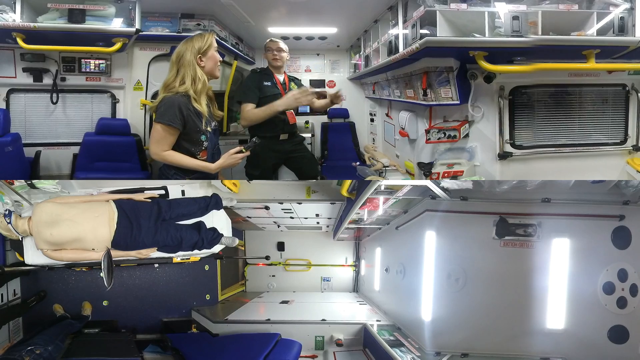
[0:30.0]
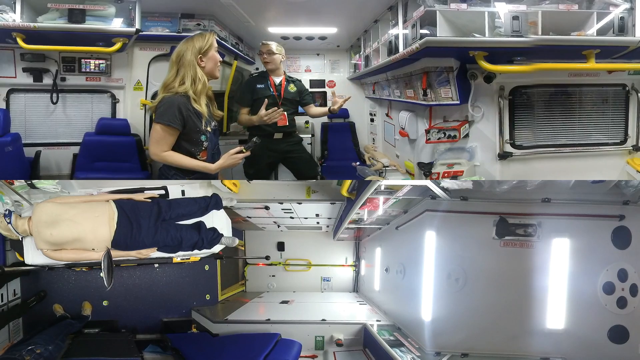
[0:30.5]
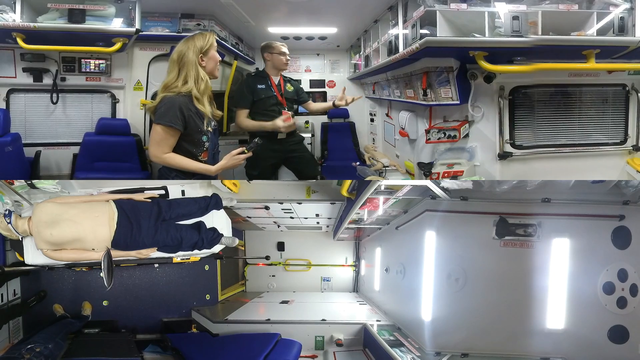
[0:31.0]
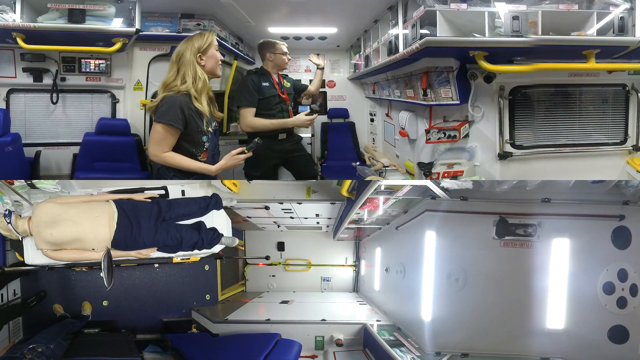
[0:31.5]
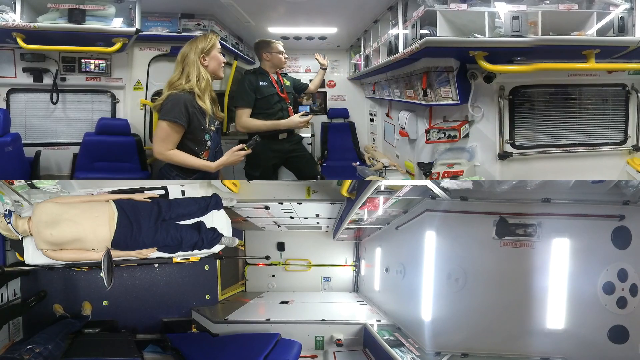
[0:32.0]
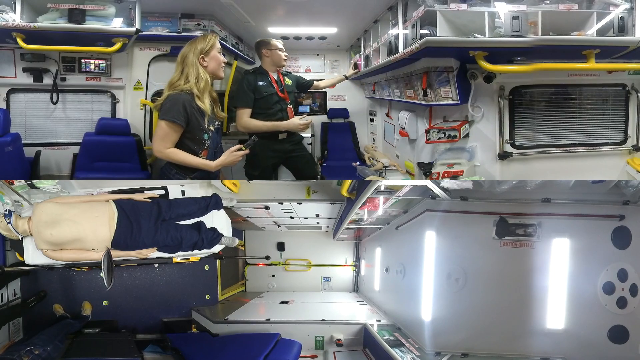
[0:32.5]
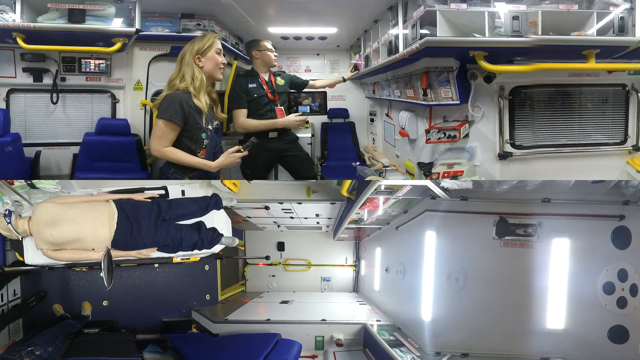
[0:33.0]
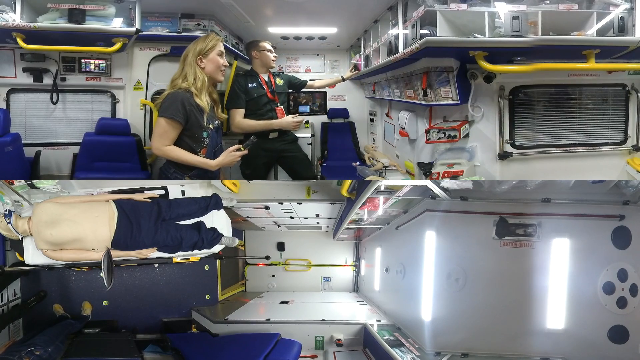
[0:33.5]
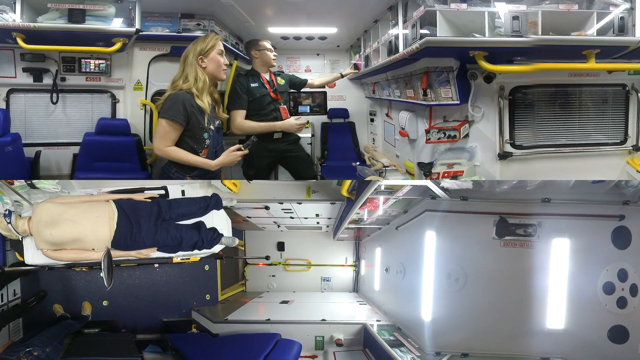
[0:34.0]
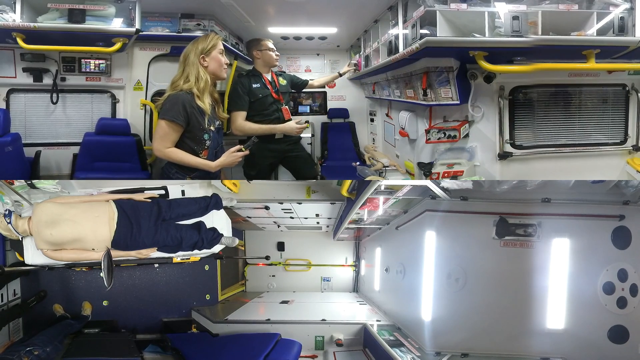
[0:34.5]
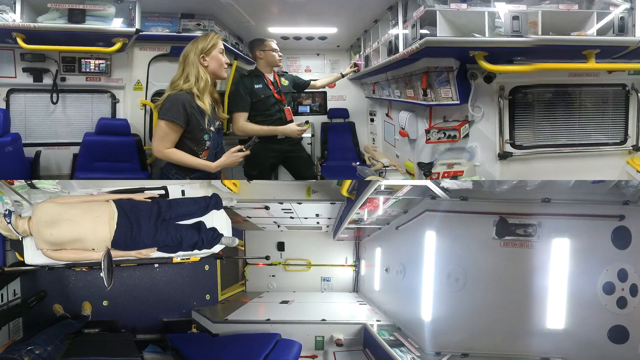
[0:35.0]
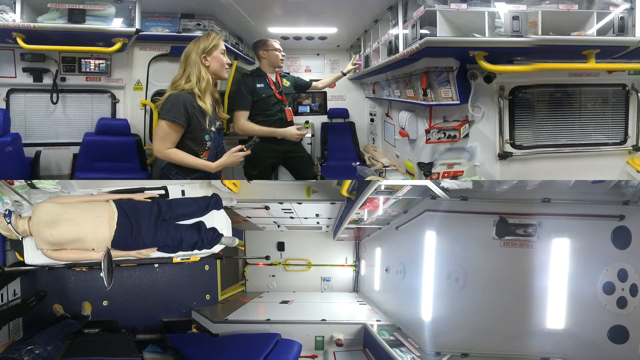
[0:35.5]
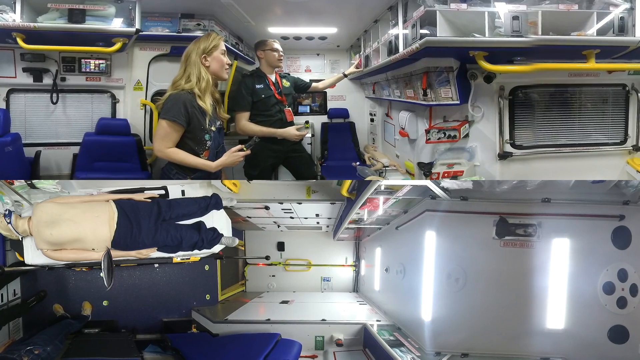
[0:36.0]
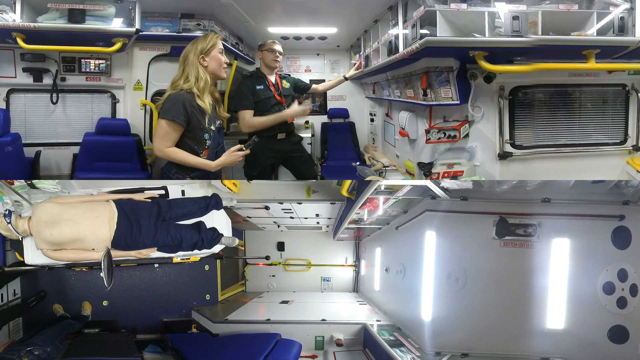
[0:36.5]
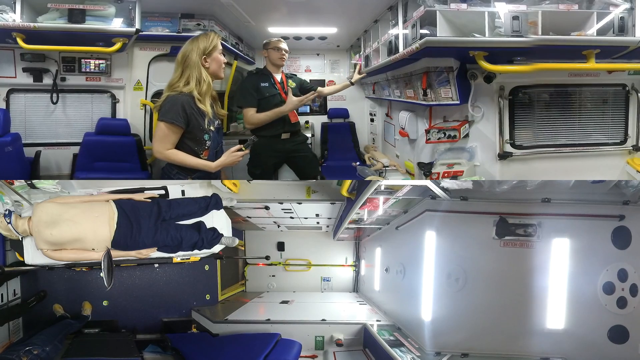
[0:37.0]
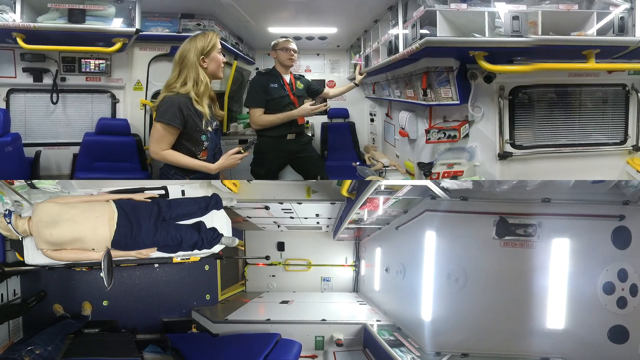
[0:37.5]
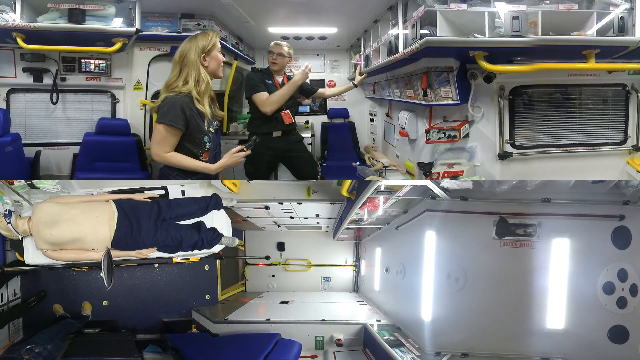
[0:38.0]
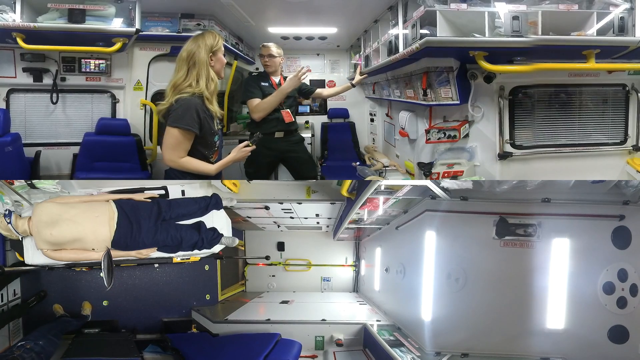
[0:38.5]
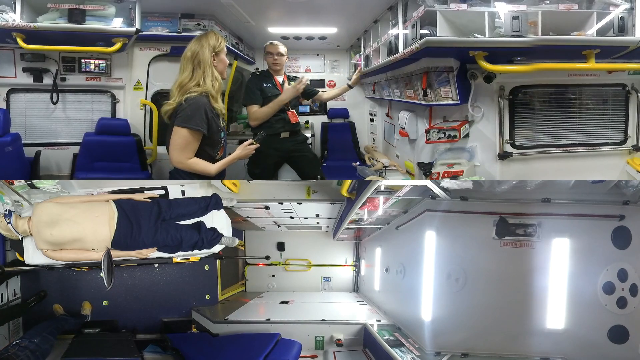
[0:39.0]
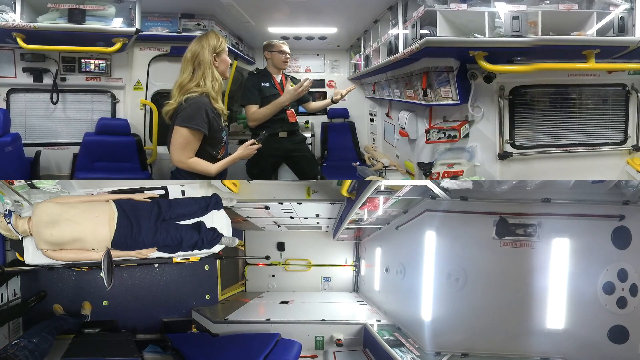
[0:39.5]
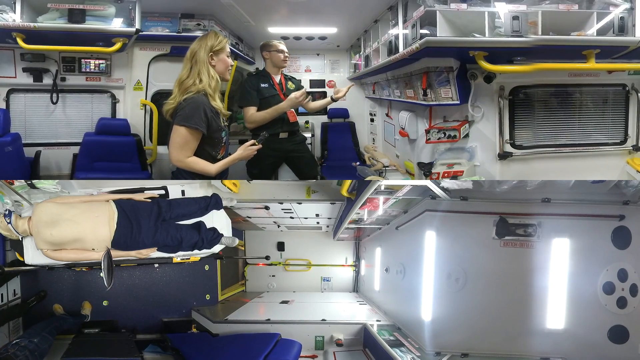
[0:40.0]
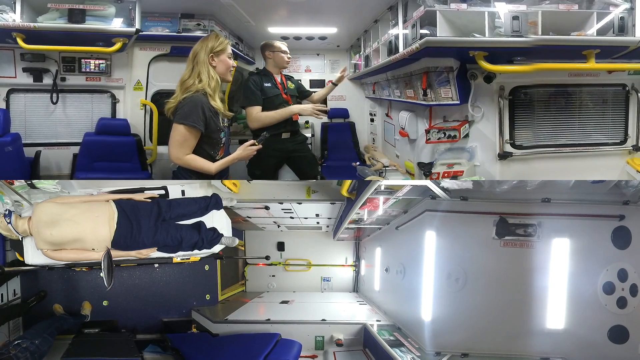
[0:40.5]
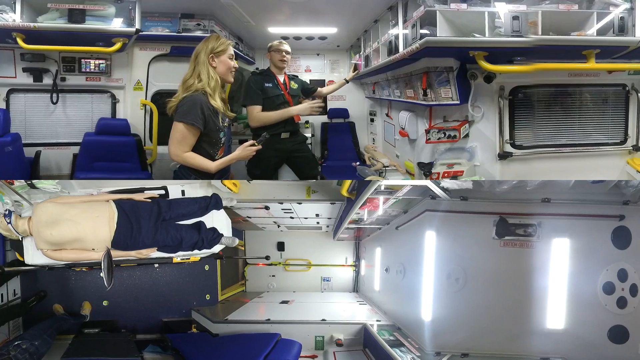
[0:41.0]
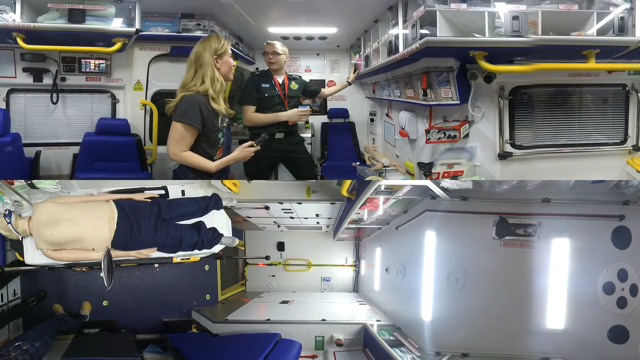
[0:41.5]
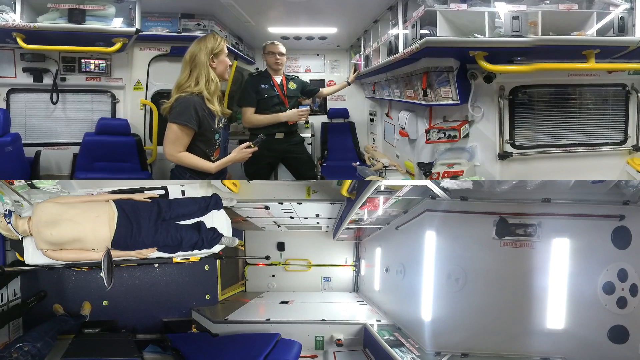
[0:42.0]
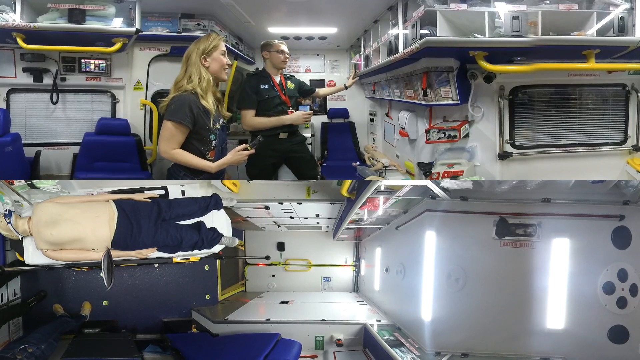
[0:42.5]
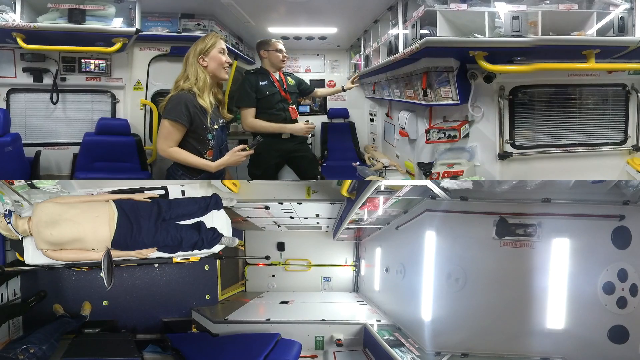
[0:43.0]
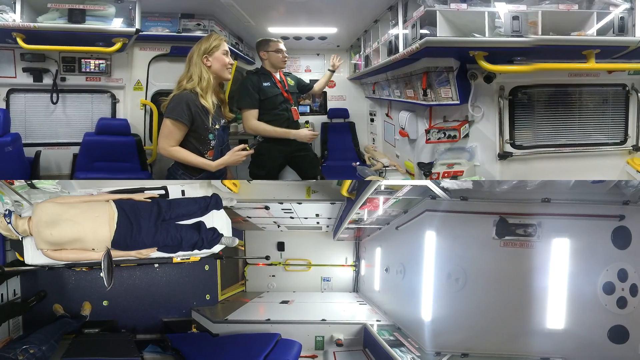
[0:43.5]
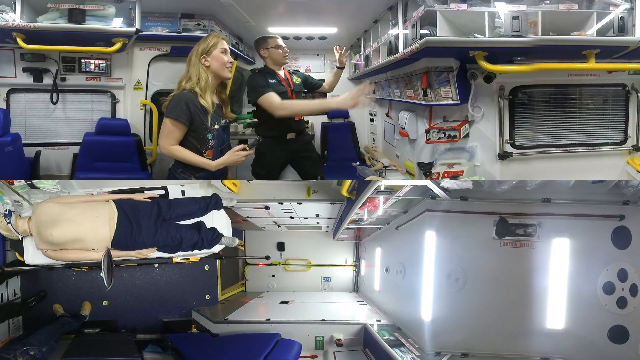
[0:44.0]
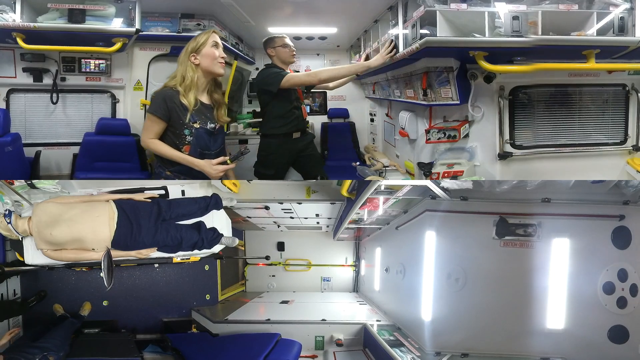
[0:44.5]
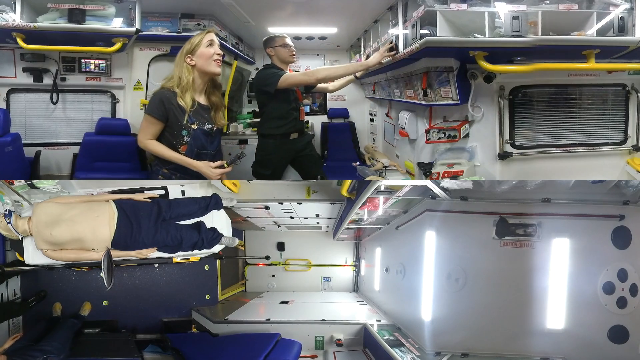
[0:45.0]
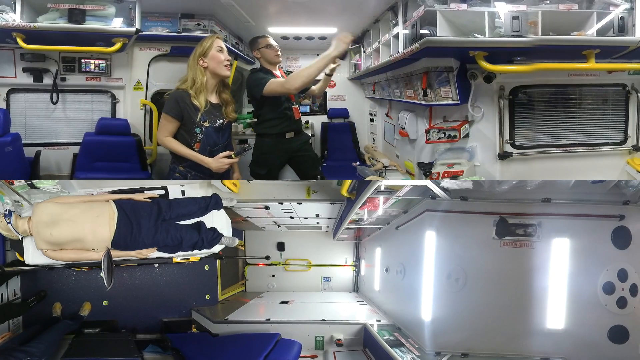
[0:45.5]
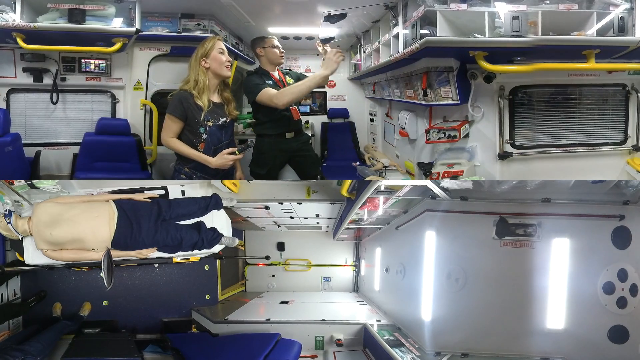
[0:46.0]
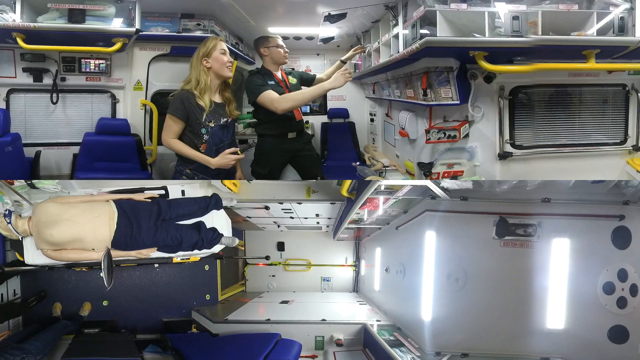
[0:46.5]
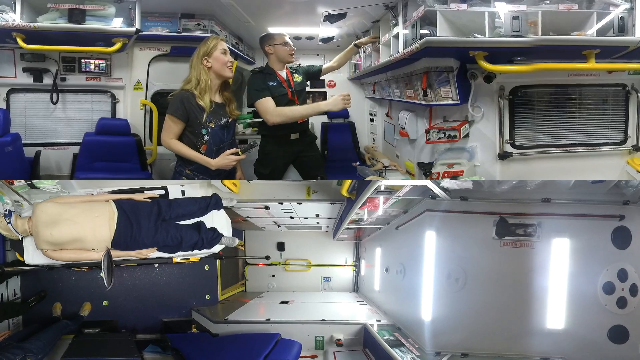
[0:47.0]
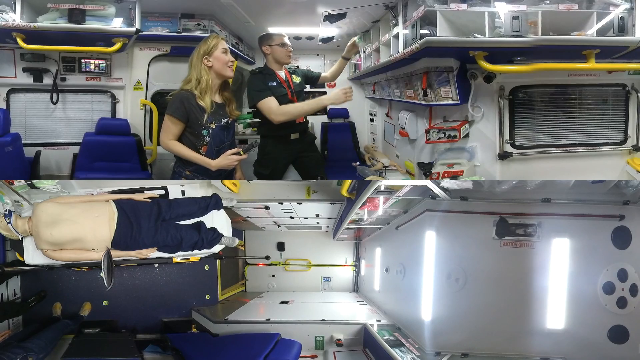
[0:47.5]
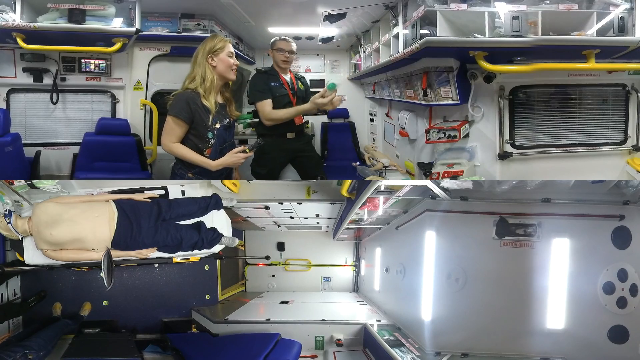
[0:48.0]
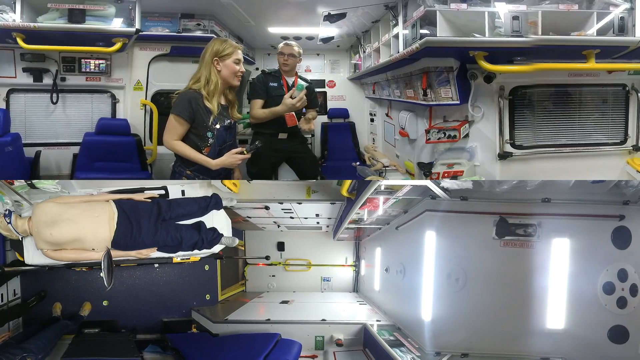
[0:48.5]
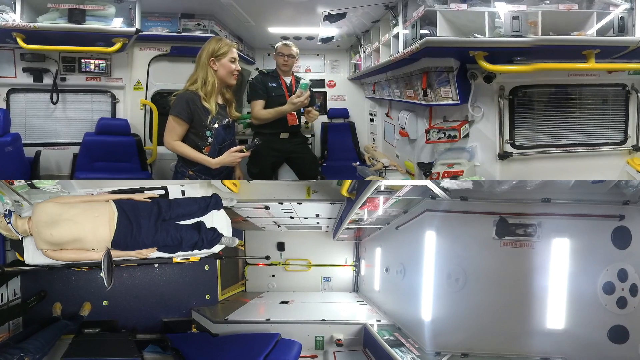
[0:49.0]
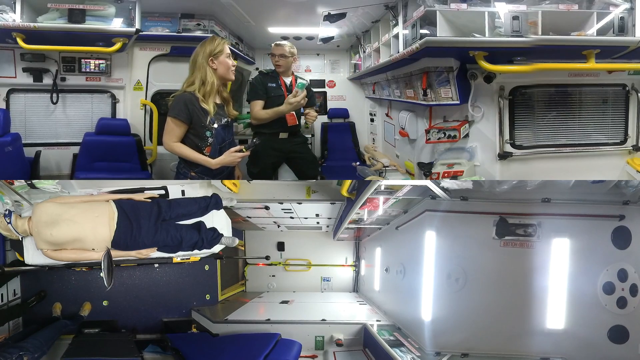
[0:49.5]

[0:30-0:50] The woman and the man appear to be talking. In this shot the man also looks a little shorter, possibly because of the location or the camera. He speaks using his hands and does much of the talking, while the woman pays attention to him. He takes something off the shelf on the overhead structure on the right: he turns to her, then to the shelves, opens one of the little bins and pulls out a small box that looks green and white. What the item is remains unclear; the box resembles an old over-the-counter medicine box. The room seems to be possibly in the back of some kind of ship. The ceiling is smooth, with a couple of large, business-type lights, and there are several small black circles on the ceiling, with more toward the back, possibly cameras or some kind of reflection. The dummy is in full view, wearing navy pants and stretched out on a gurney.